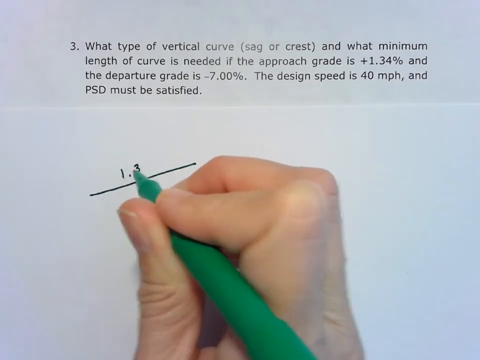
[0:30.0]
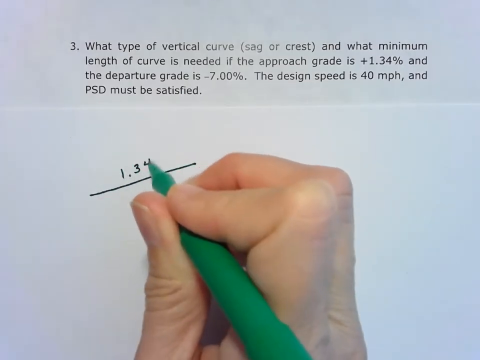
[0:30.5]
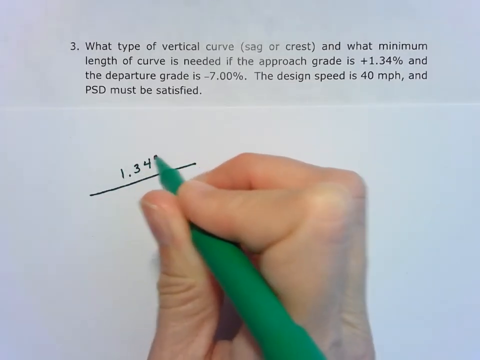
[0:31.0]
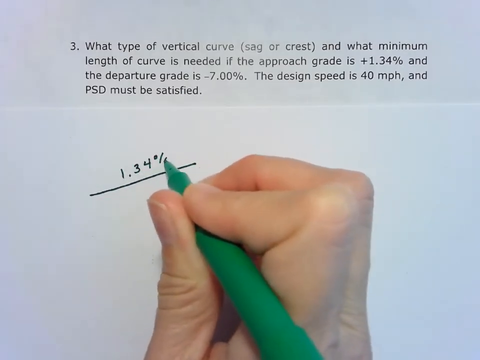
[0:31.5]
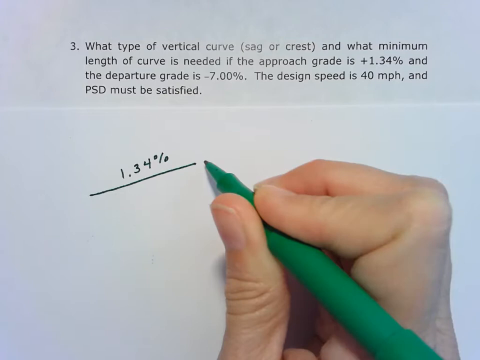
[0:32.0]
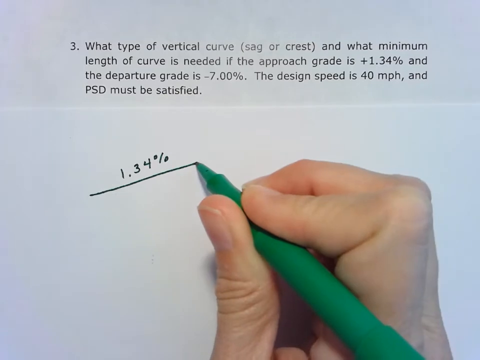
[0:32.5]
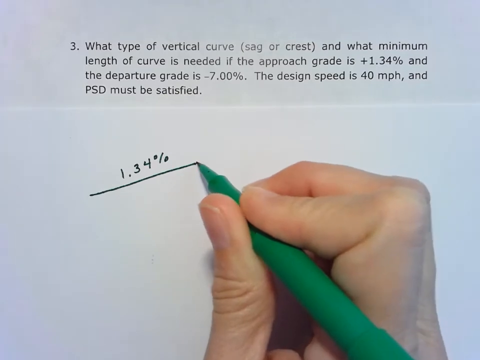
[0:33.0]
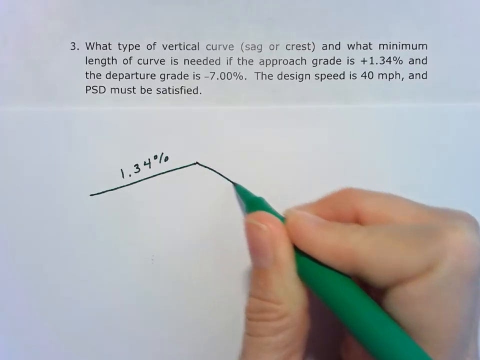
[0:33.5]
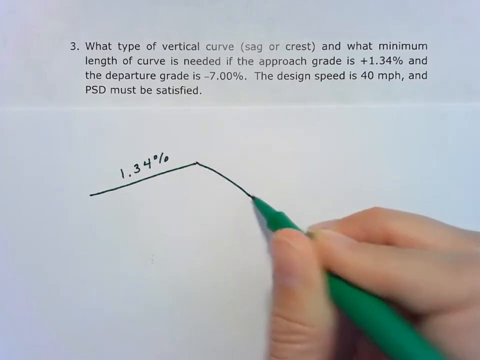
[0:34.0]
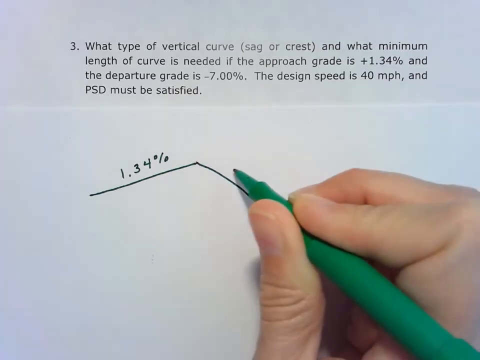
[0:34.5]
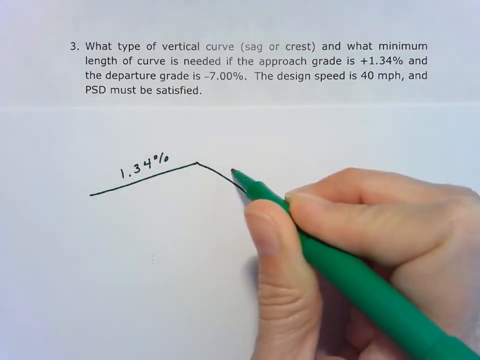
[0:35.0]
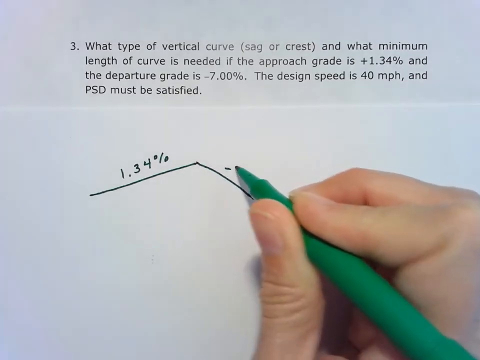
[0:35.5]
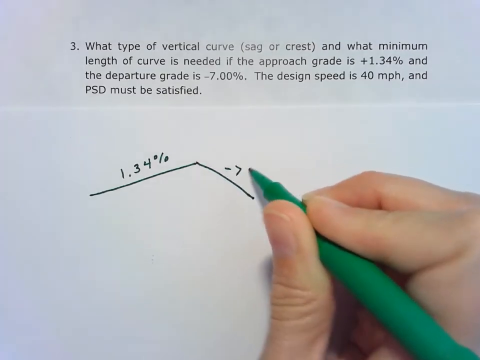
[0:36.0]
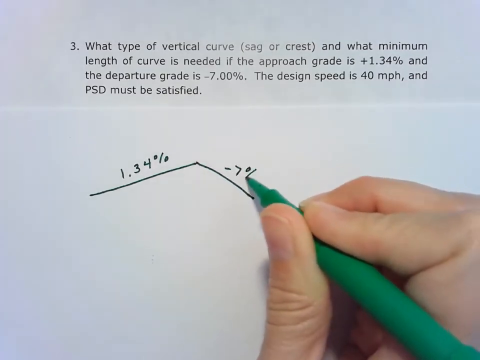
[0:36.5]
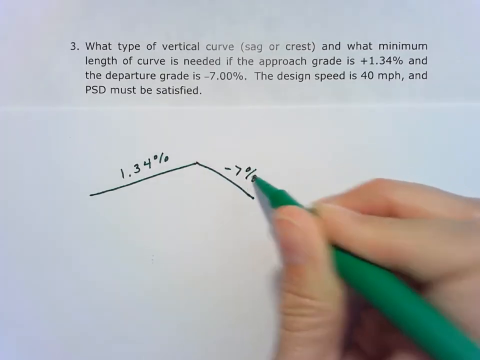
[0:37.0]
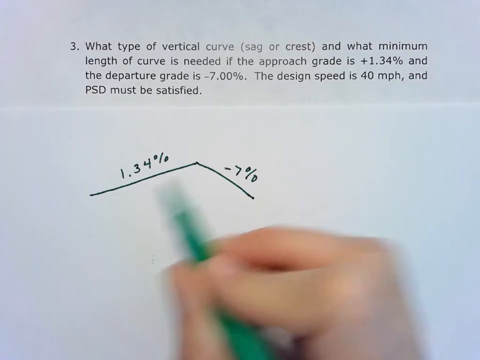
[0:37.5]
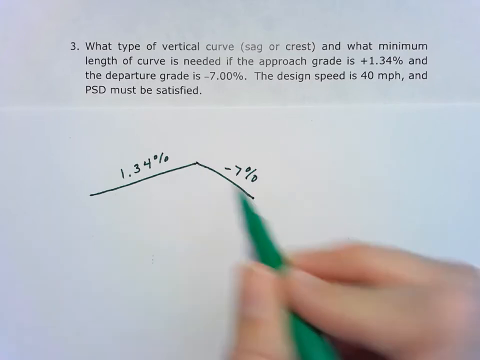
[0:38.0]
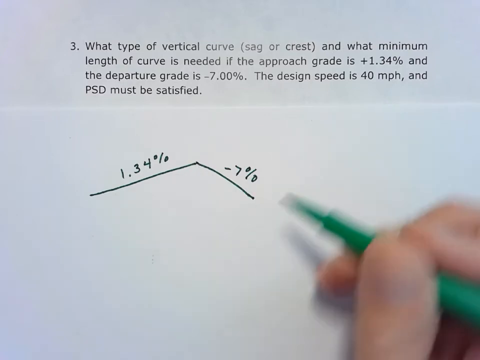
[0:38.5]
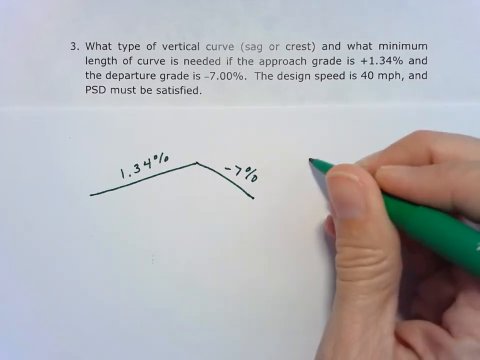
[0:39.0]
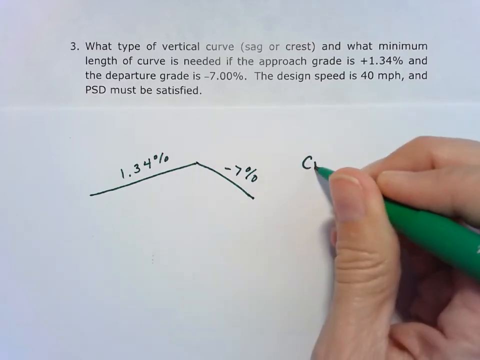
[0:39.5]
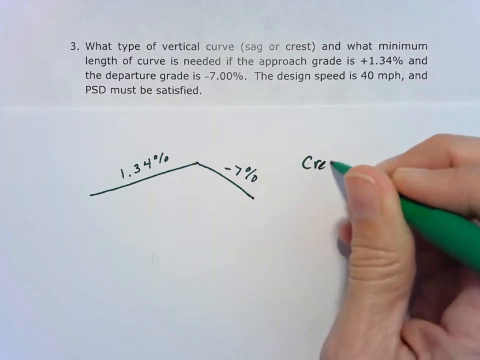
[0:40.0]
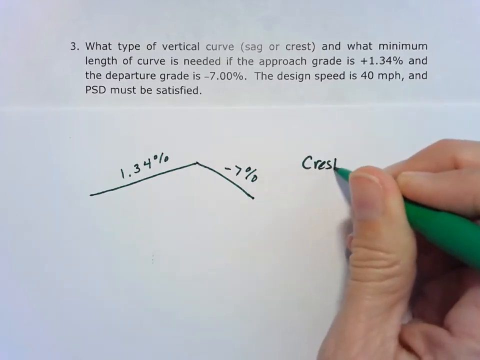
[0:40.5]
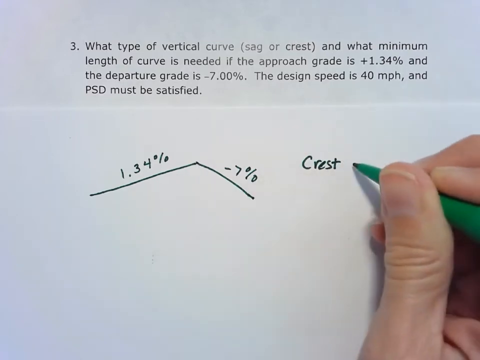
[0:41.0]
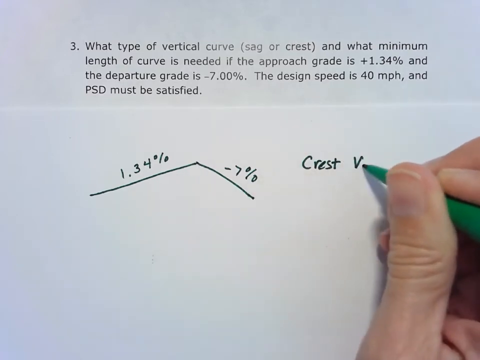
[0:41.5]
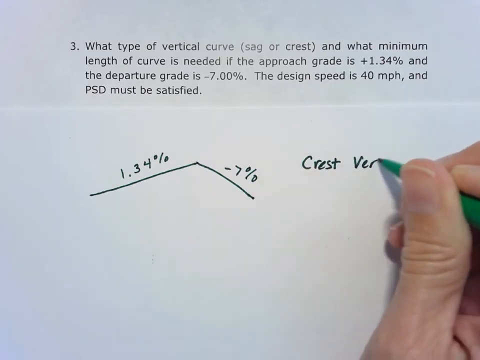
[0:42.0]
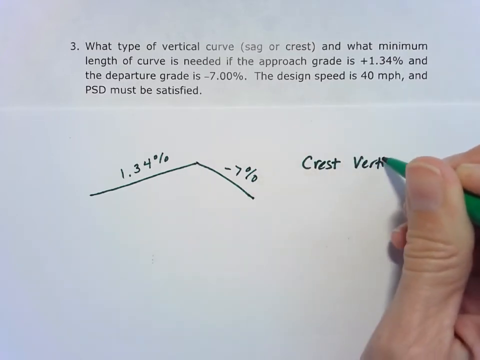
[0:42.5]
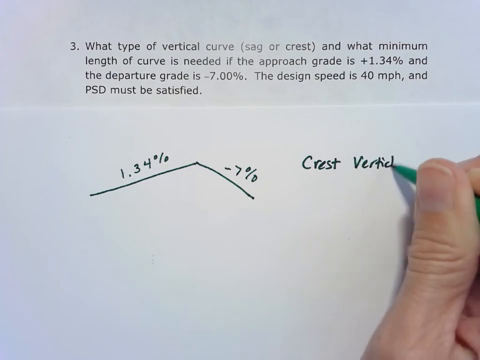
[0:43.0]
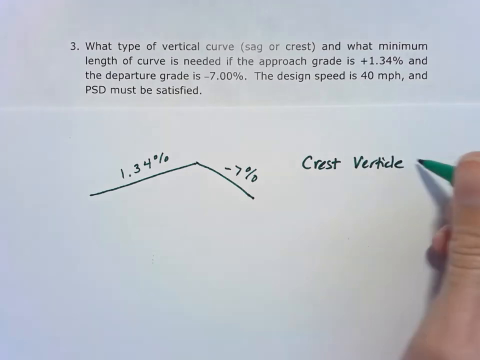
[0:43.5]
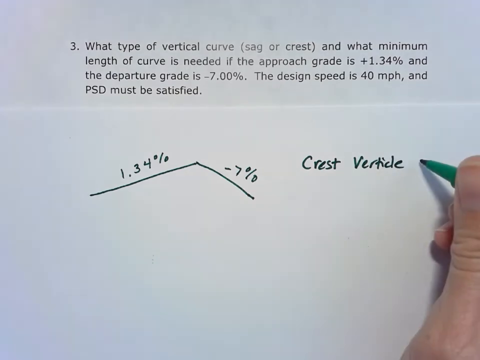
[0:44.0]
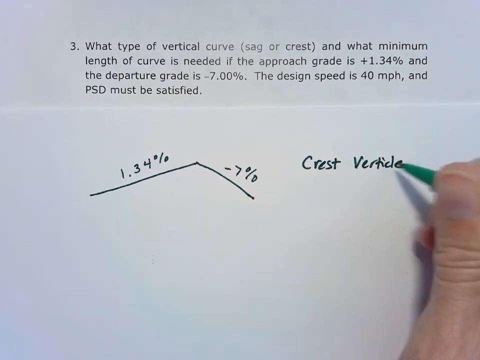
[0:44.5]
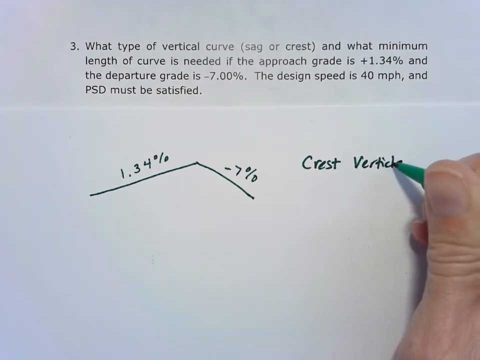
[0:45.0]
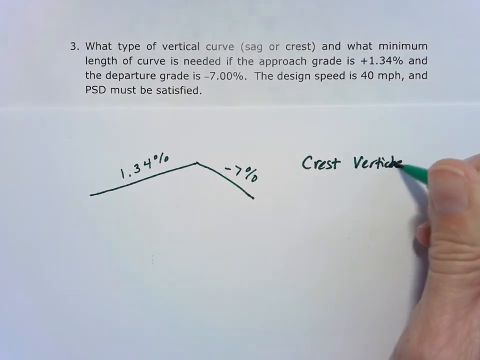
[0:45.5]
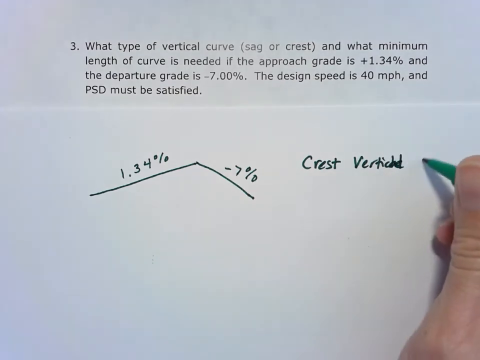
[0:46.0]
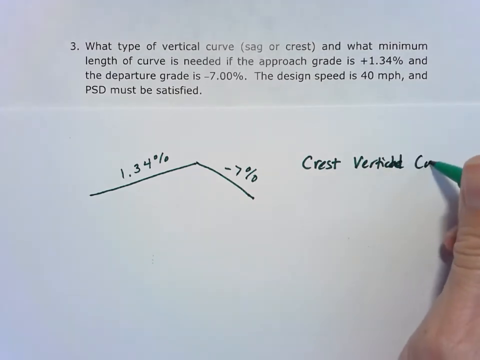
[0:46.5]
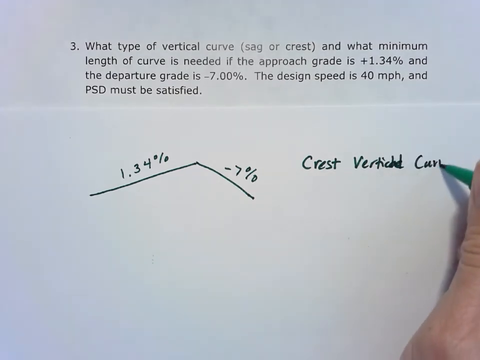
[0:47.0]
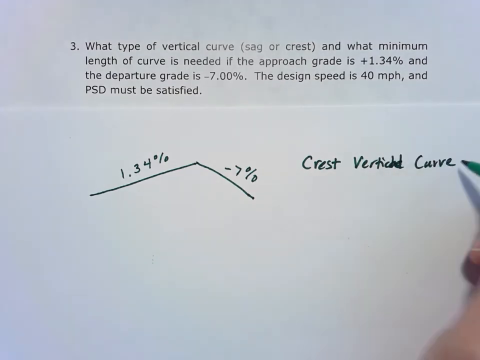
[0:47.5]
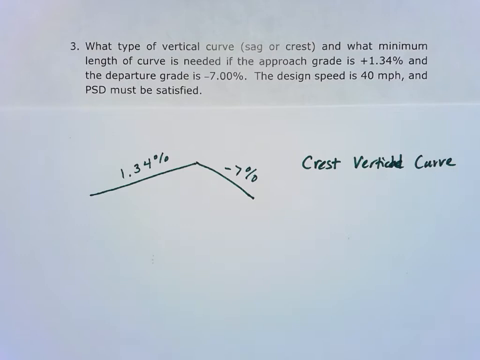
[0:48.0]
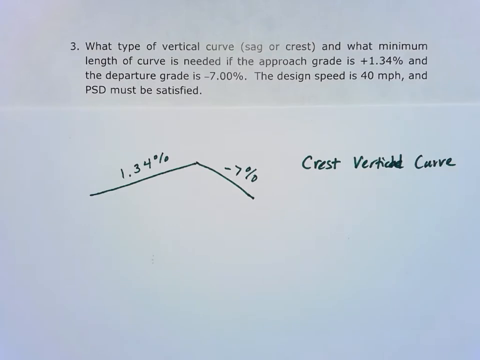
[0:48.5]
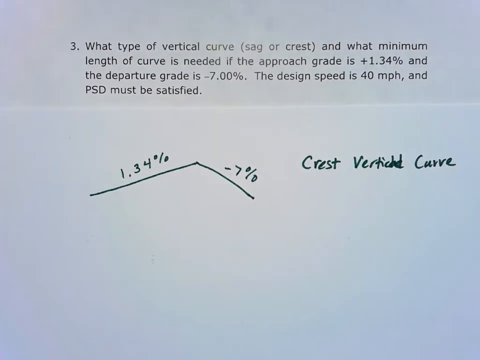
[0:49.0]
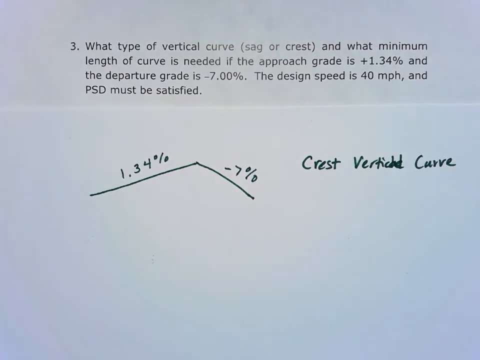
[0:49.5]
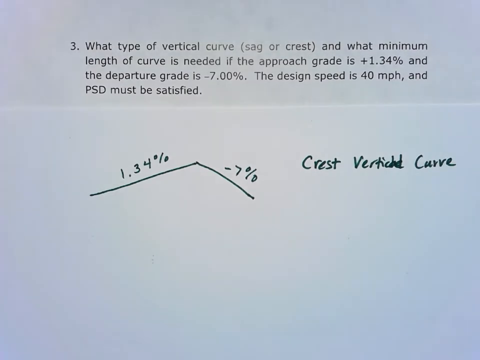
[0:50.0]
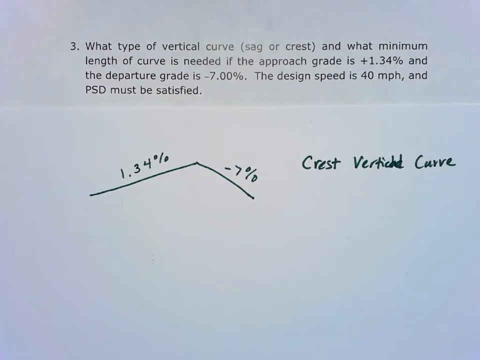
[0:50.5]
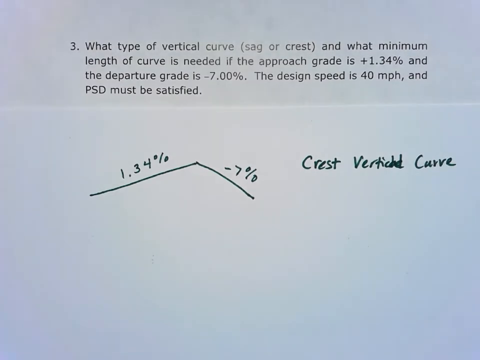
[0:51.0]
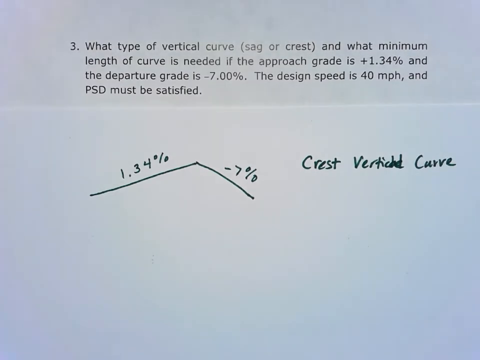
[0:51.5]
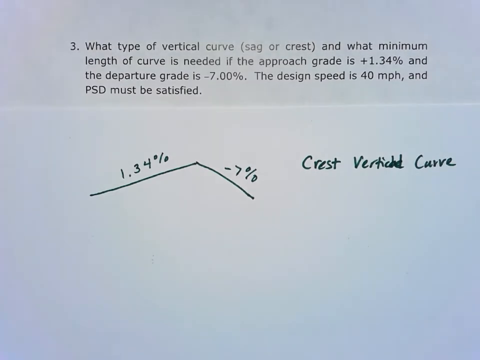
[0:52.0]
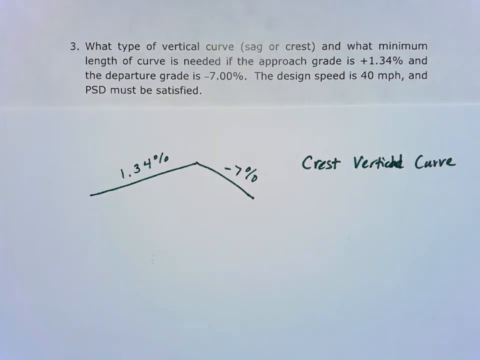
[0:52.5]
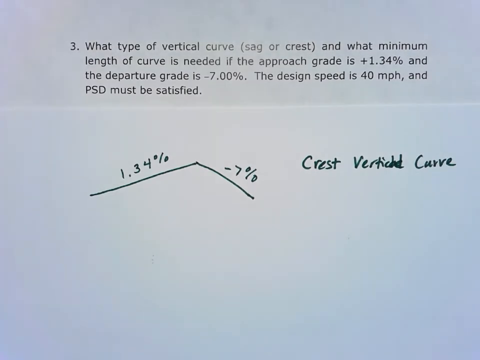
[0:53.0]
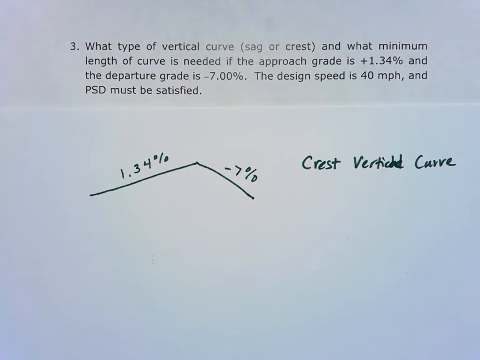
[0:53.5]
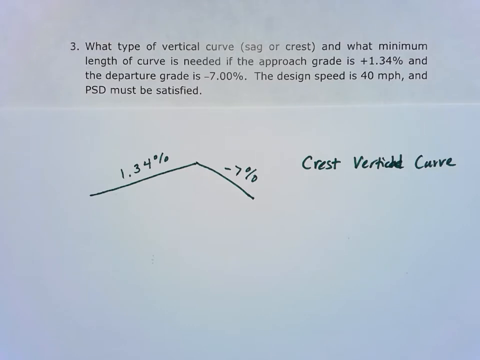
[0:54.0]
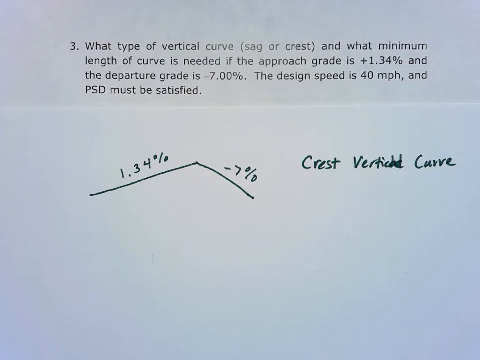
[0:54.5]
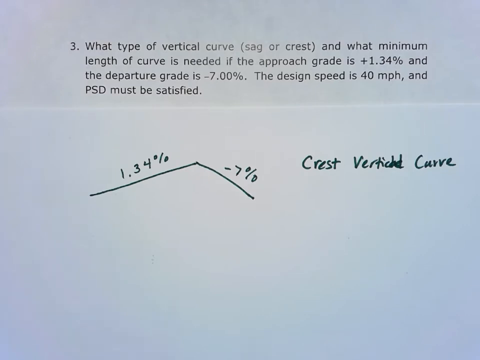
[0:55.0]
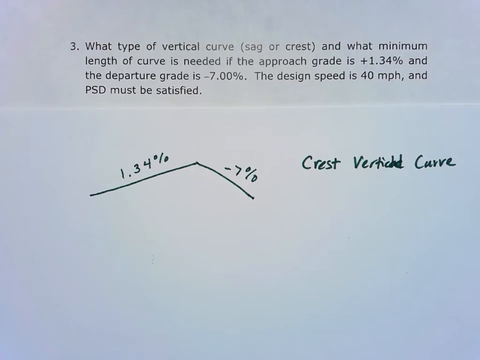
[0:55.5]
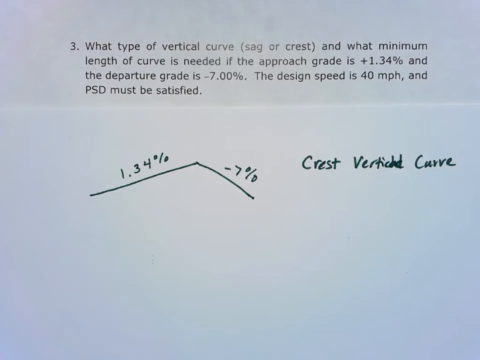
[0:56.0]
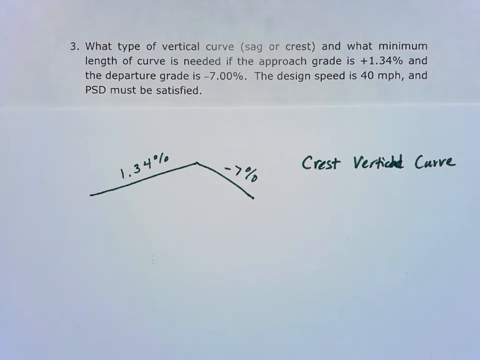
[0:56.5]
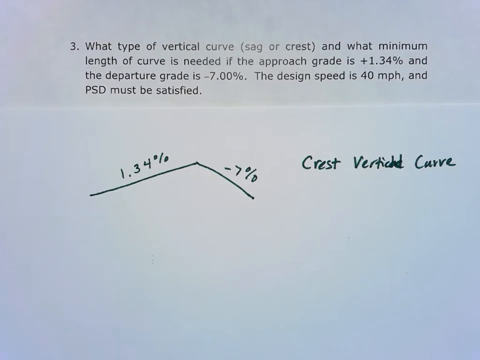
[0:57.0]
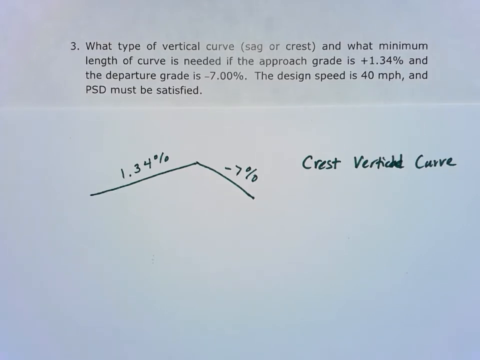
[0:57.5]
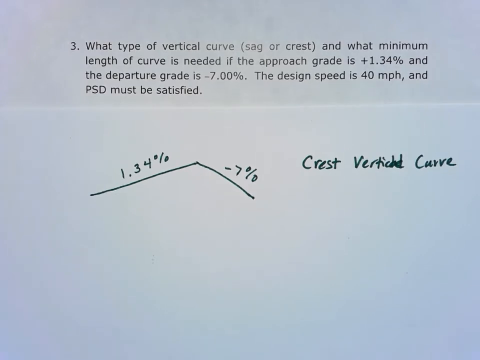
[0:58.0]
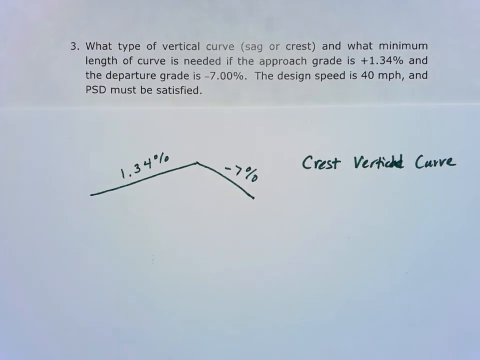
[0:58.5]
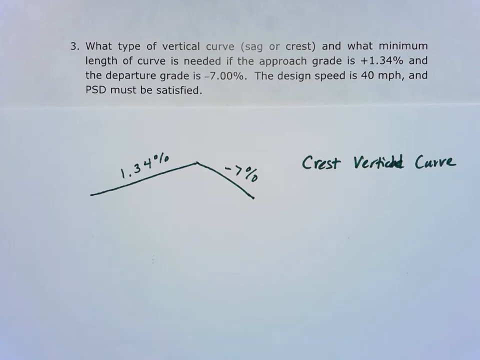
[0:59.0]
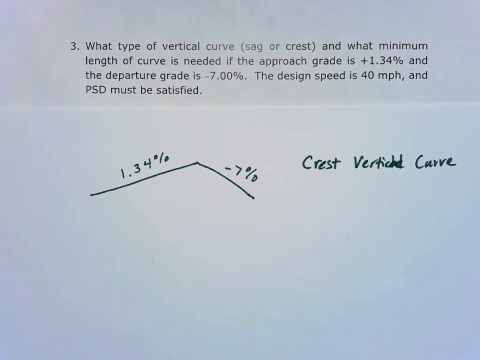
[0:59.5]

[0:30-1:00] A hand holding a green pen draws the answer to a question typed at the top of the piece of paper. It draws a straight line and writes 1.3% above it, then draws a second line connected to the first but pointing down and writes -7%. The pen then moves to the right and writes "Crest Vertical Curve", misspelling "vertical" and correcting it. It looks like a how-to video on approaching the question written in black at the top of the page: "what type of vertical curve (sag or crest) and what minimum length of curve is needed if the approach grade is +1.34% and the departure grade is -7.00%. The design speed is 40 mph and PSD must be satisfied."